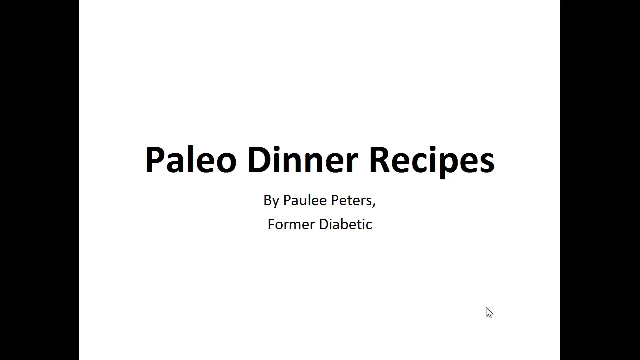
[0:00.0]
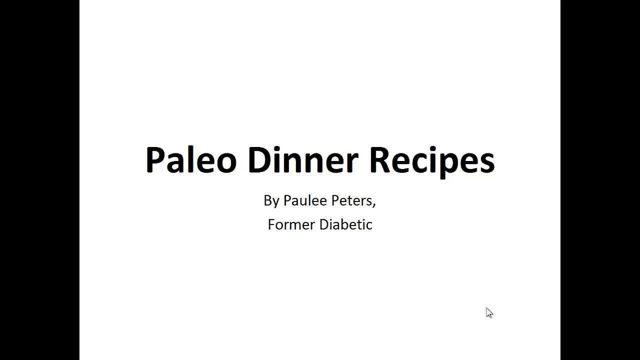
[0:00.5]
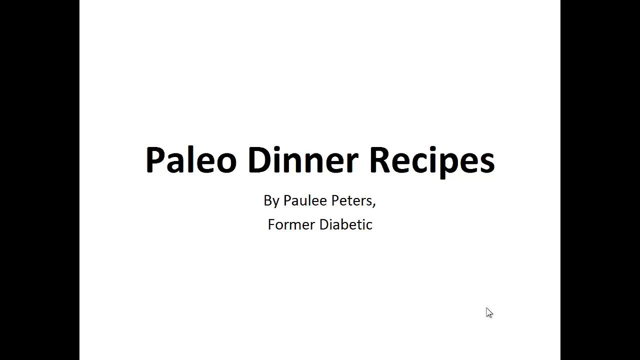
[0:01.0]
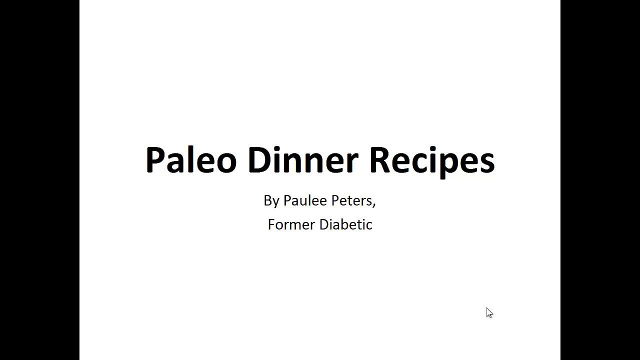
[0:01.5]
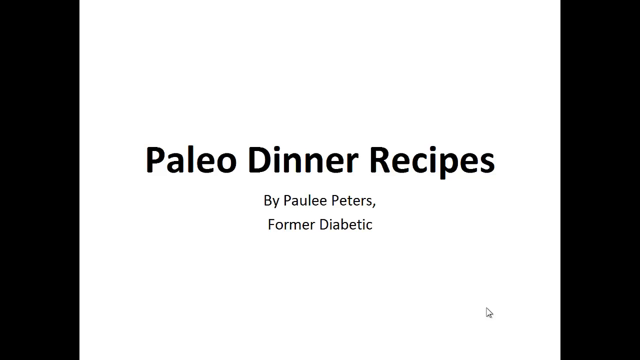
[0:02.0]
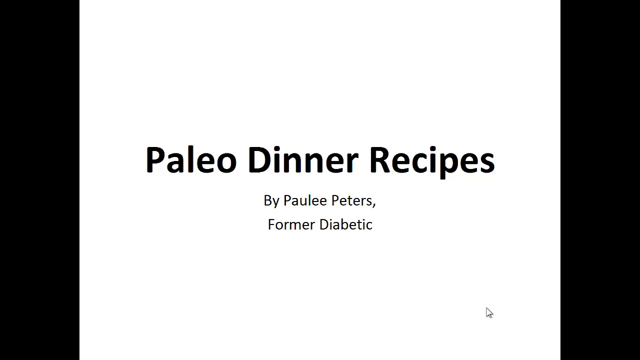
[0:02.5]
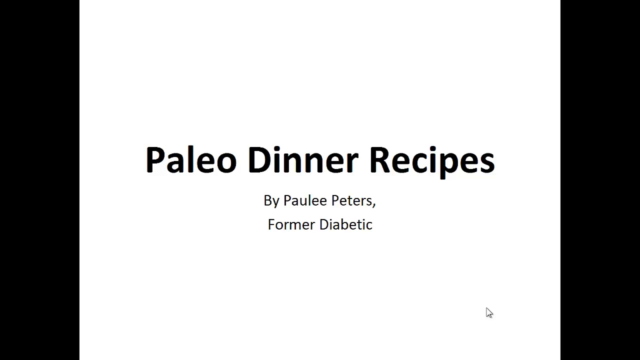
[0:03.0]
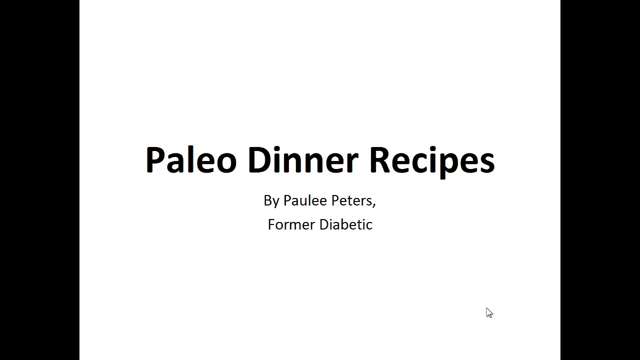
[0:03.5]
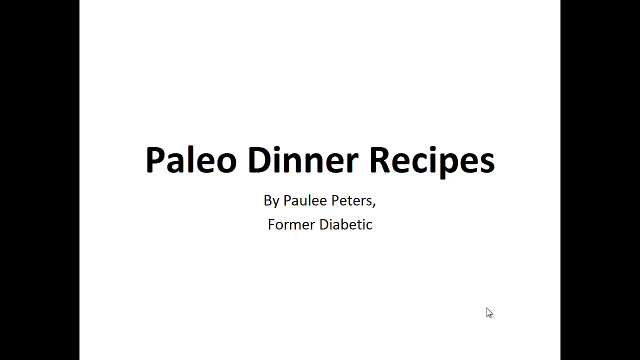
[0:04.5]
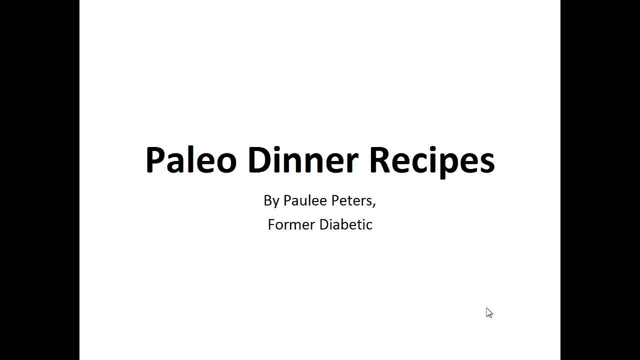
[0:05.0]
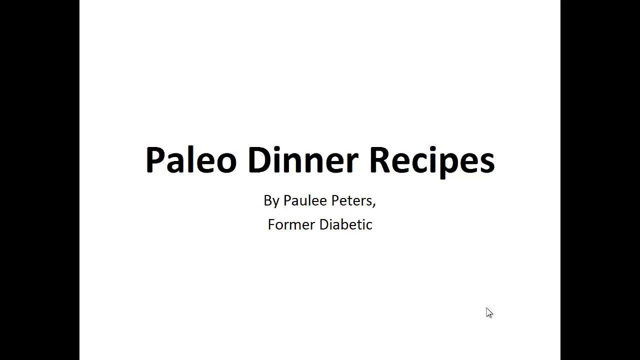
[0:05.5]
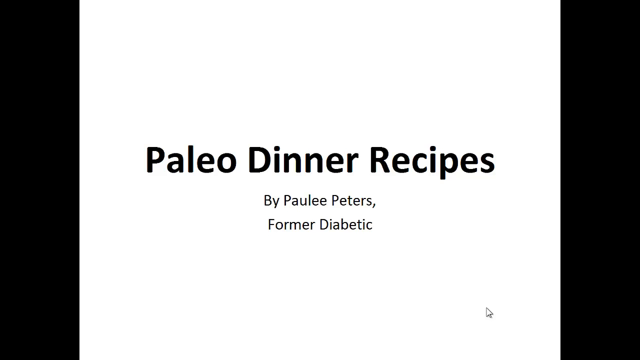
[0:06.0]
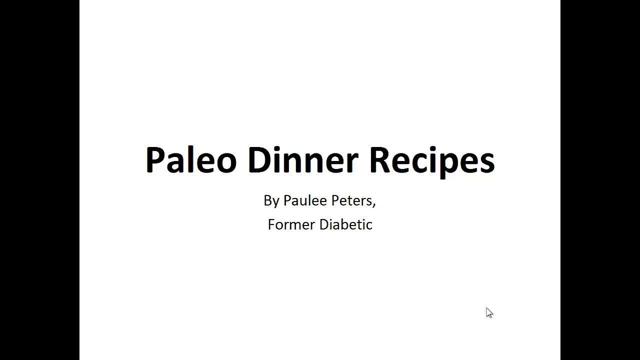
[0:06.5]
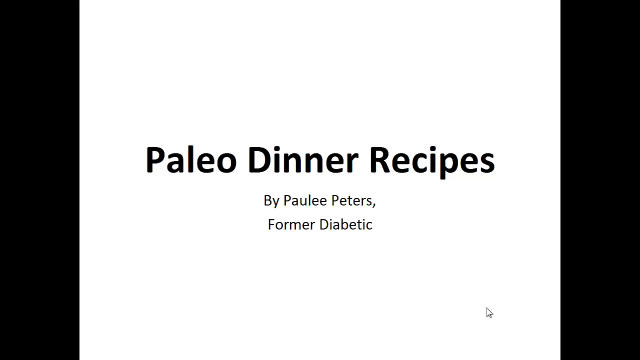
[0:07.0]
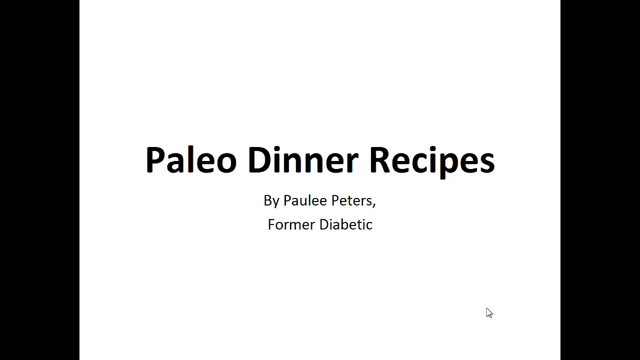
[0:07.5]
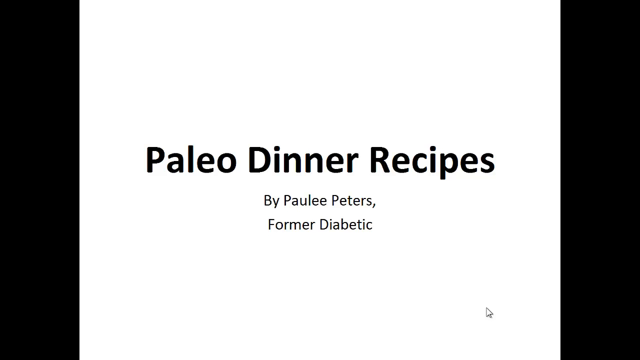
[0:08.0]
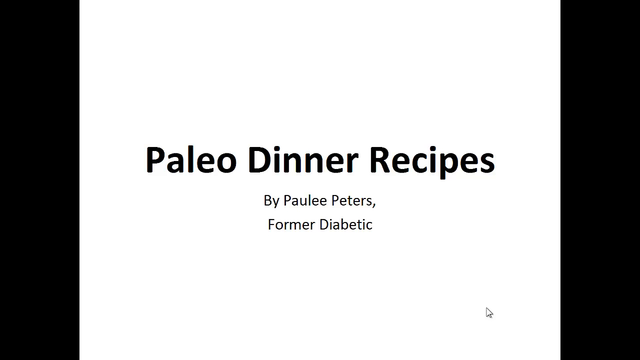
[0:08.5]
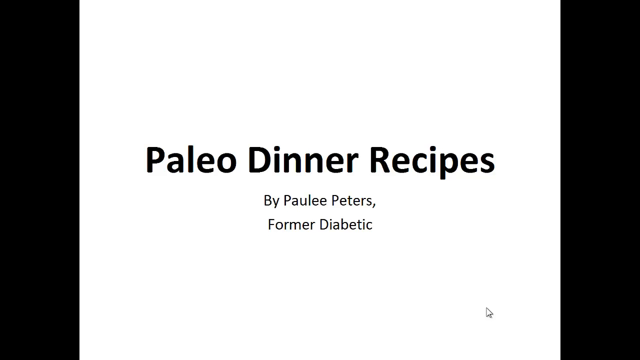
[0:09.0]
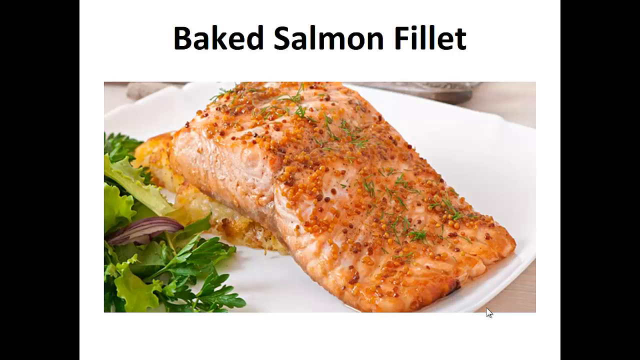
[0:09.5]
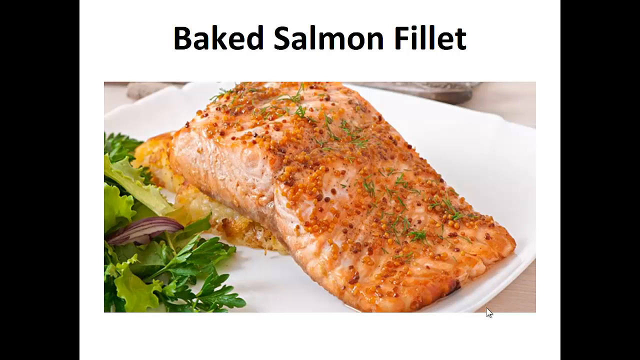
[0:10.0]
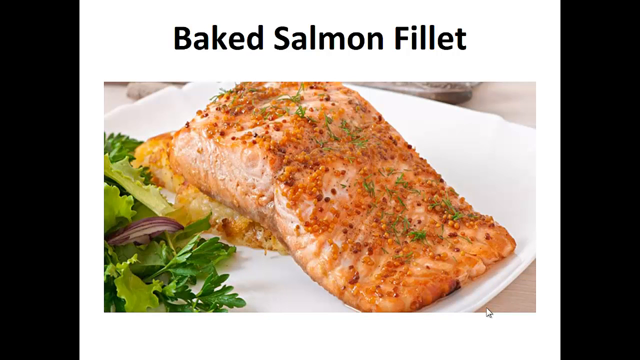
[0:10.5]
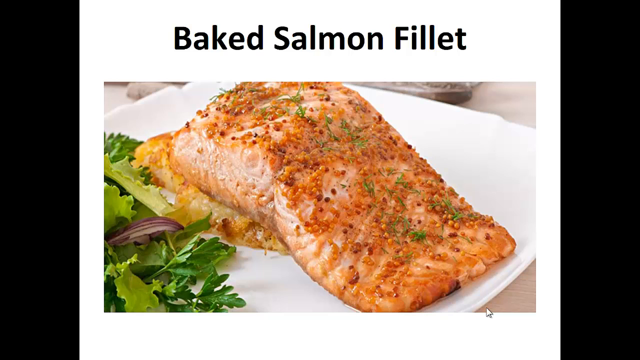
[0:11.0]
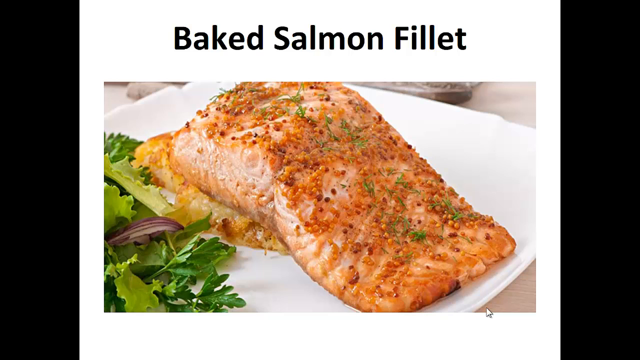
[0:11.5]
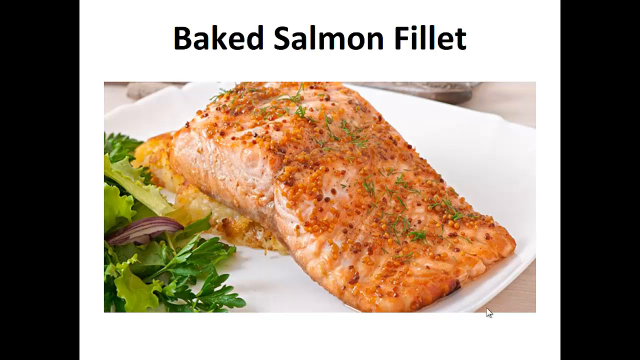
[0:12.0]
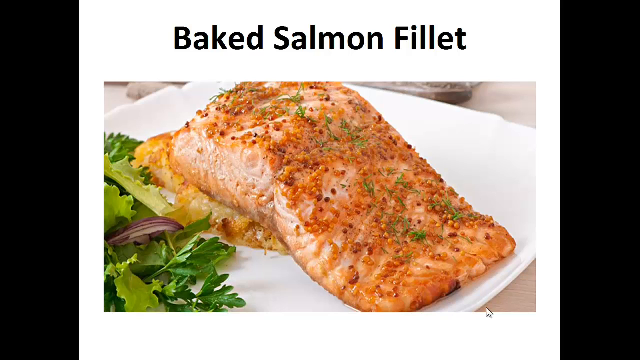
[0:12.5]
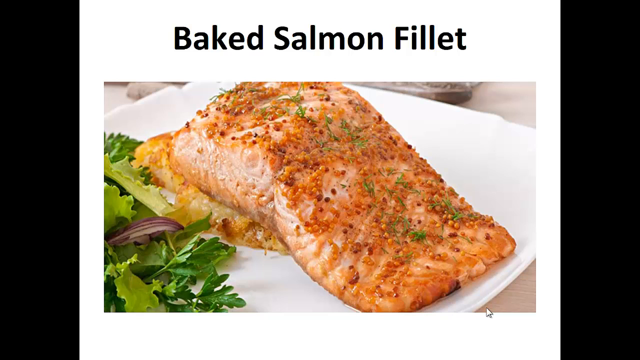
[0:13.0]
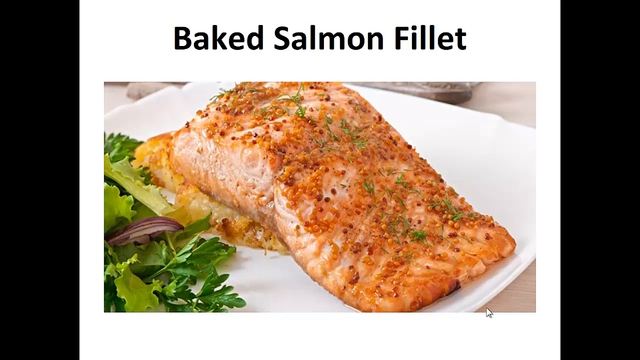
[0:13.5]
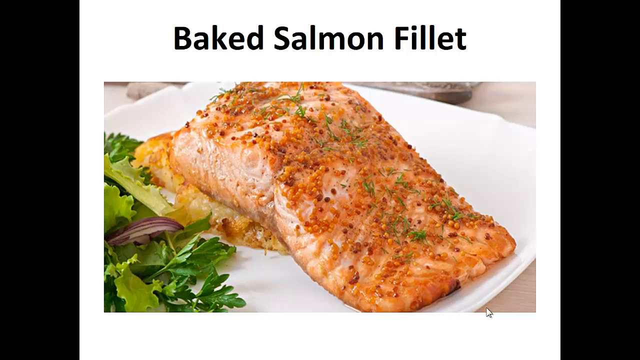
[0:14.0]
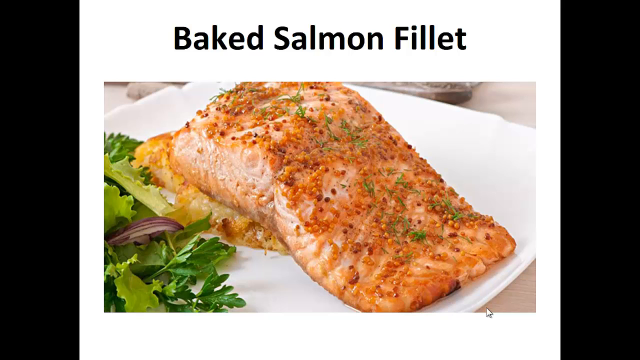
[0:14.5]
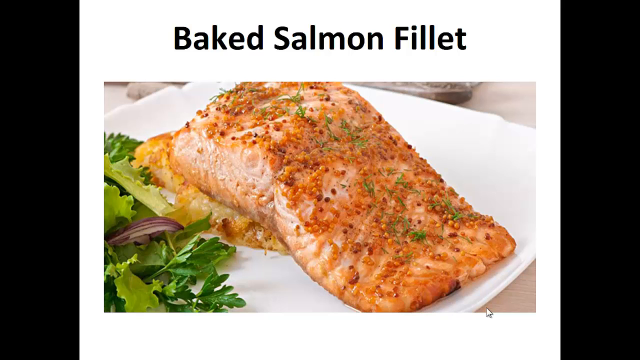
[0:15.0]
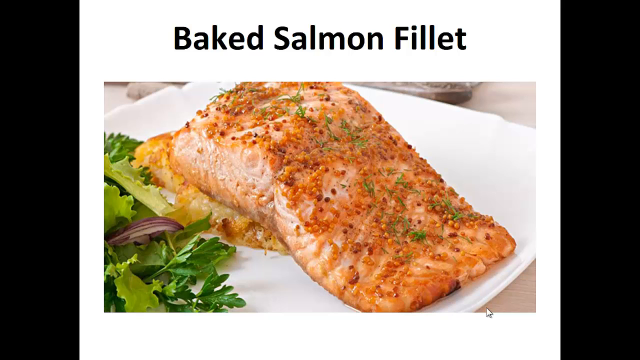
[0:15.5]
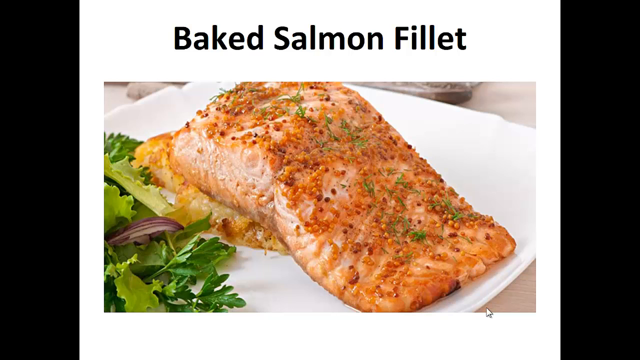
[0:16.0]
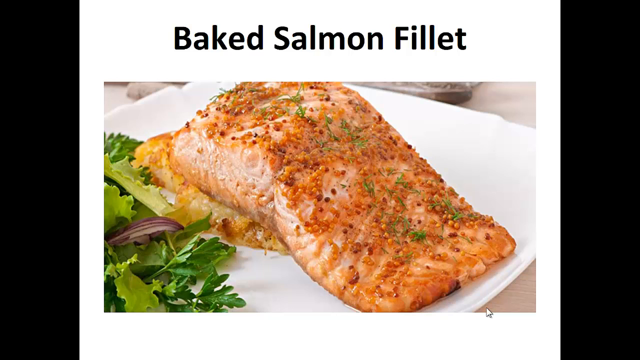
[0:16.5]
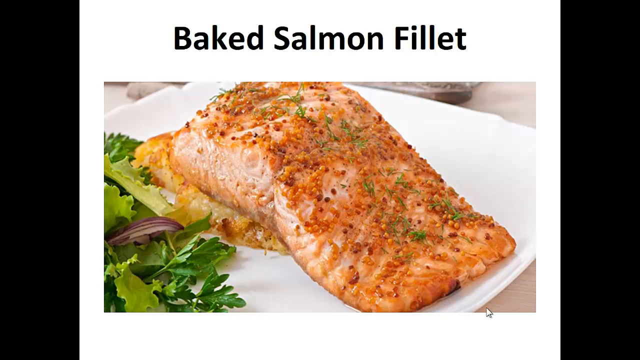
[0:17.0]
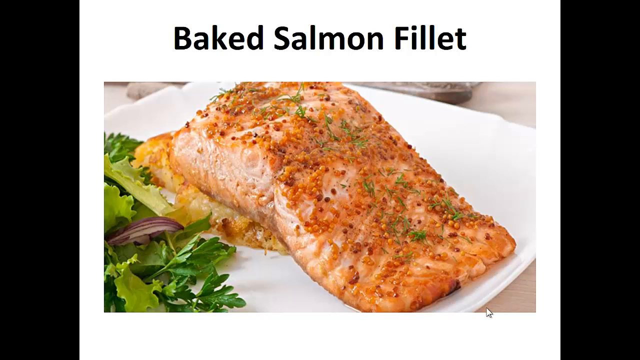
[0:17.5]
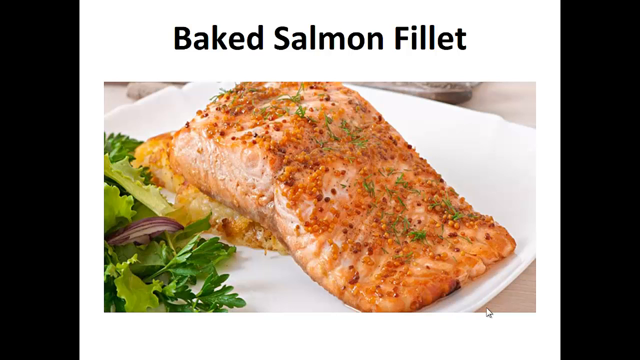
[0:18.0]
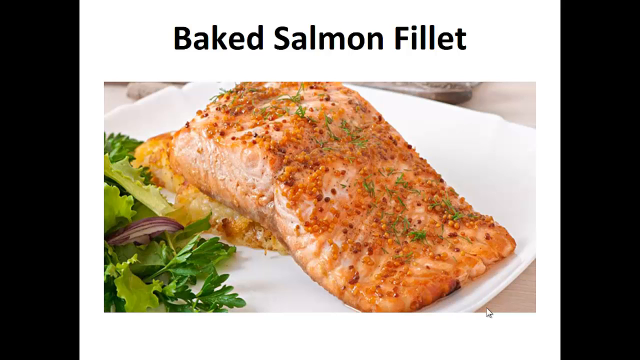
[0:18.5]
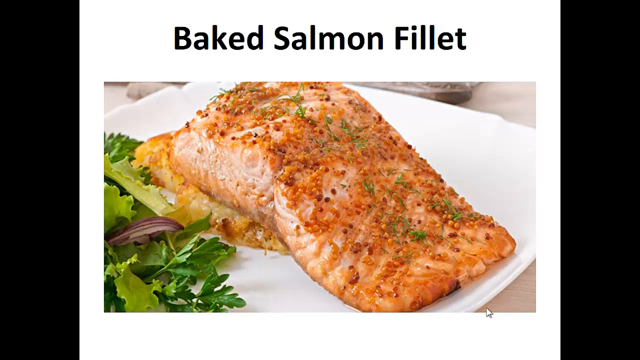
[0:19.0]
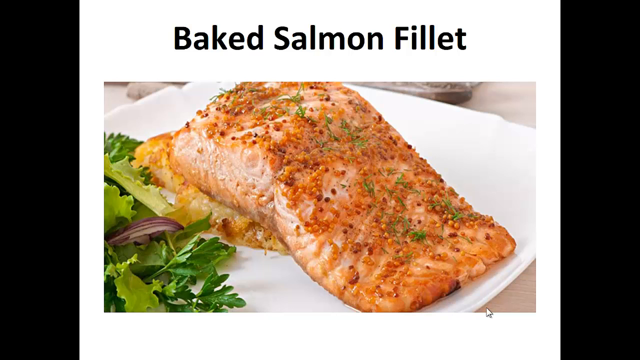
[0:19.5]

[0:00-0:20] Bold black words reading "PaleoDinnerRecipes" appear on a plain white background. Under them is the name of the person who created the recipes, Paulie Peters, identified as a former diabetic. A salmon fillet then appears, looking well seasoned and well packed, on a white plate. Beside the salmon is what looks like a green salad with lettuce, something that looks like mint leaves, and red onion.